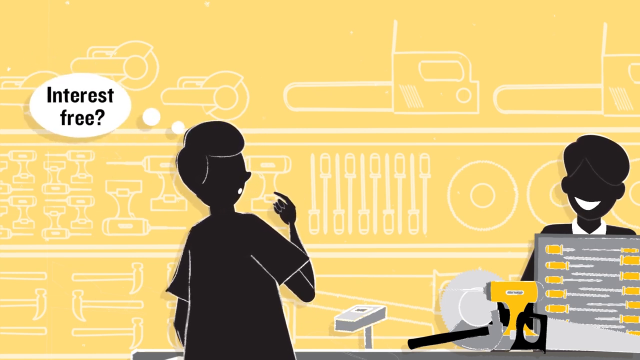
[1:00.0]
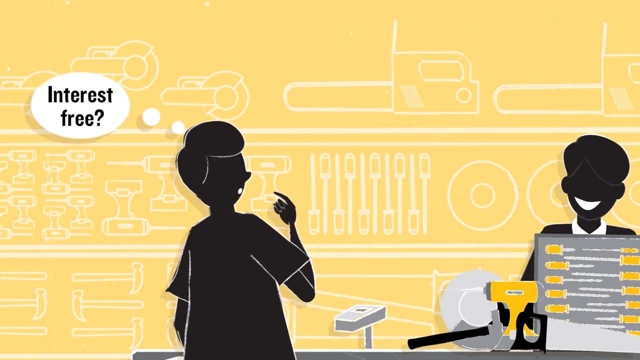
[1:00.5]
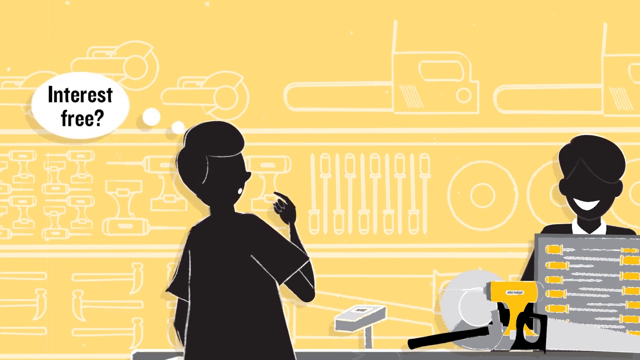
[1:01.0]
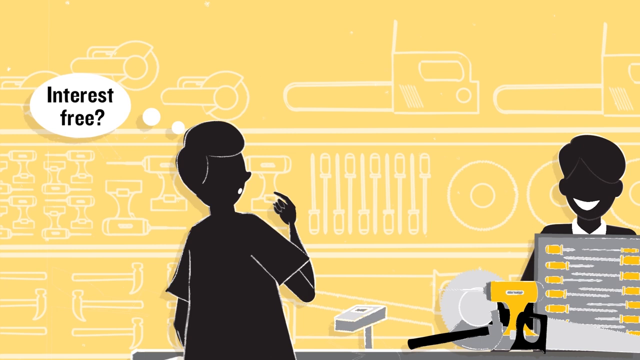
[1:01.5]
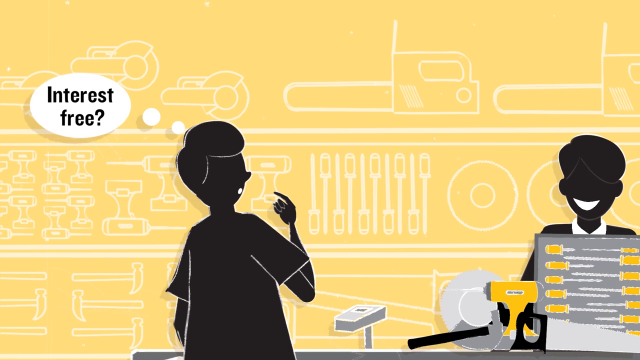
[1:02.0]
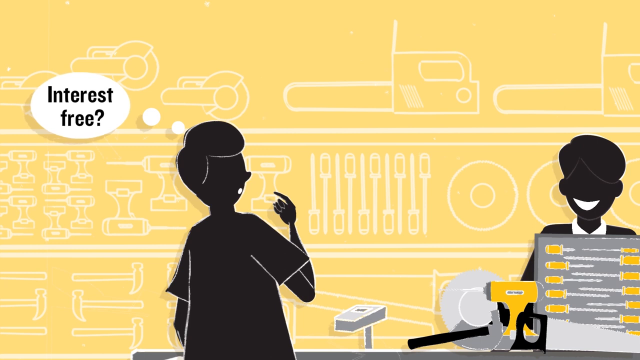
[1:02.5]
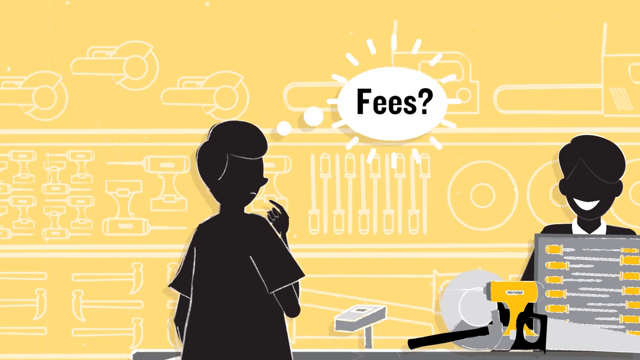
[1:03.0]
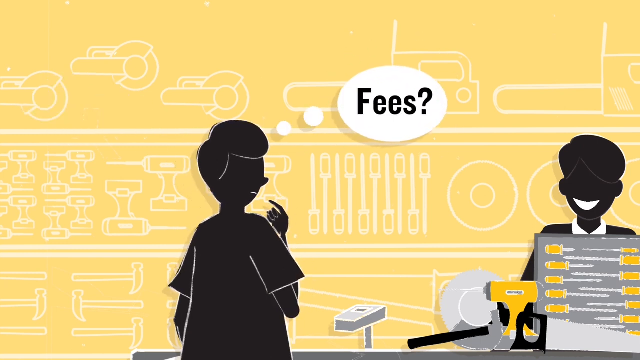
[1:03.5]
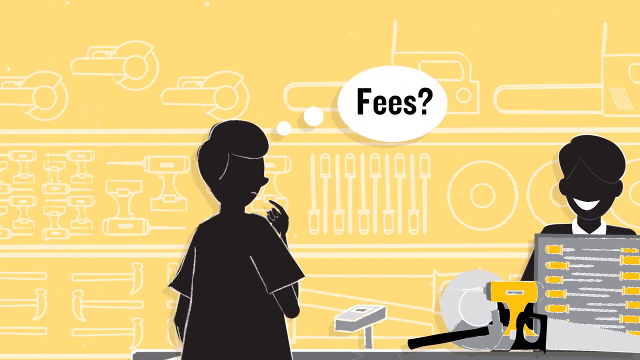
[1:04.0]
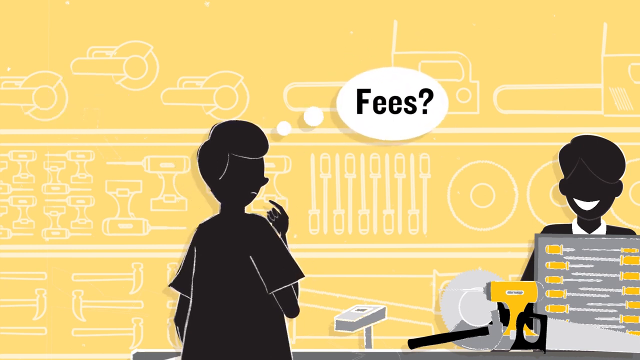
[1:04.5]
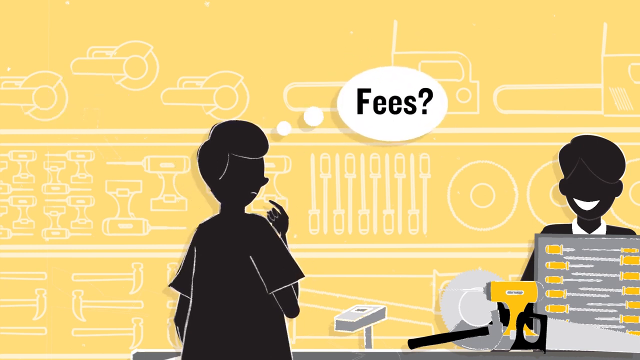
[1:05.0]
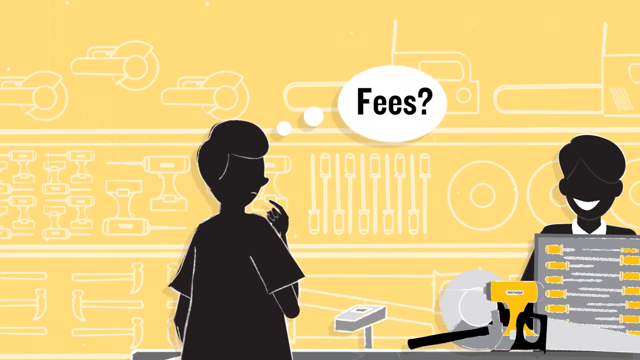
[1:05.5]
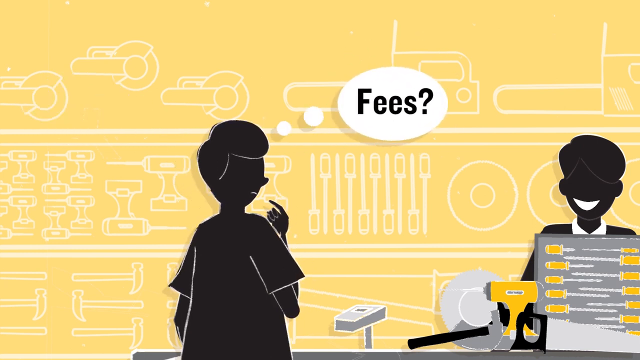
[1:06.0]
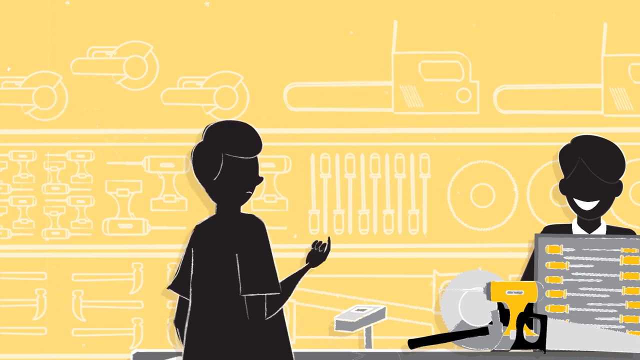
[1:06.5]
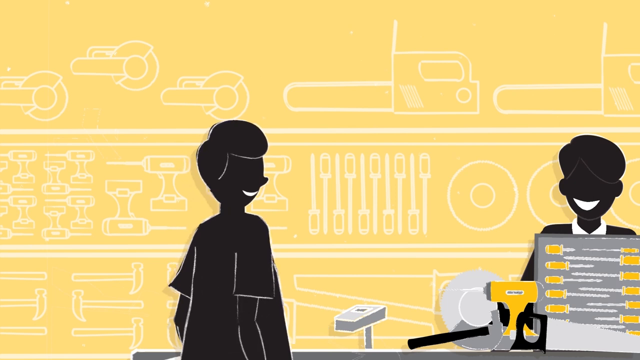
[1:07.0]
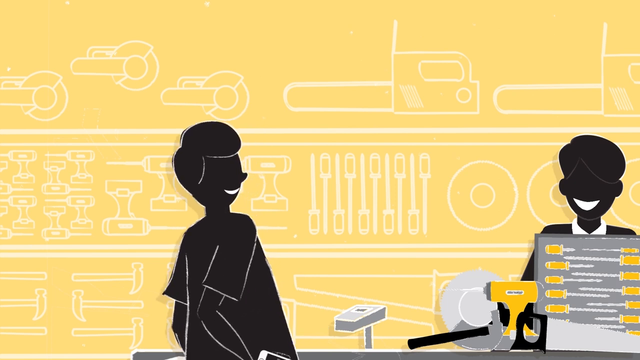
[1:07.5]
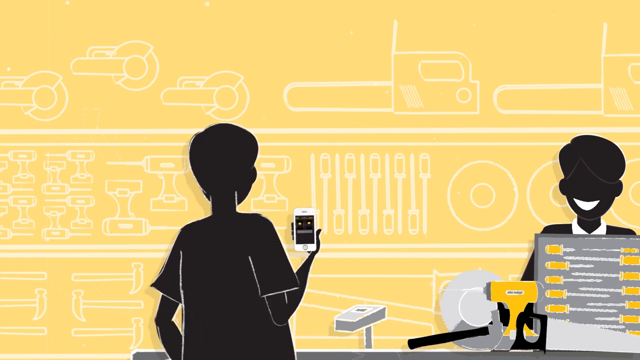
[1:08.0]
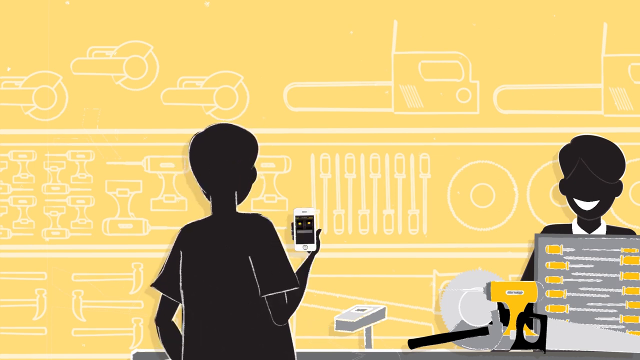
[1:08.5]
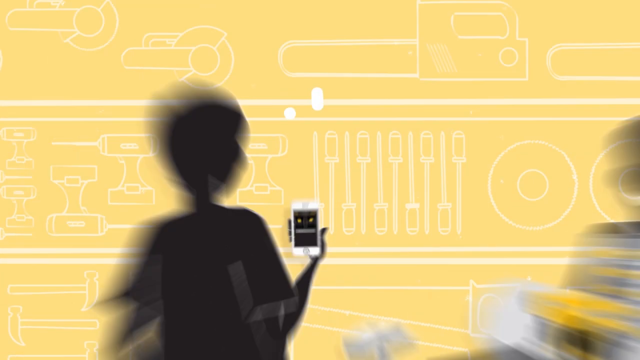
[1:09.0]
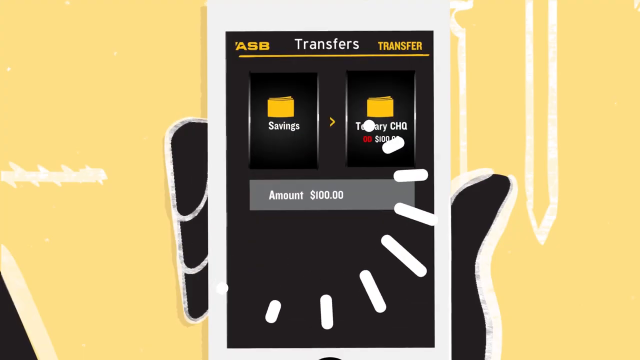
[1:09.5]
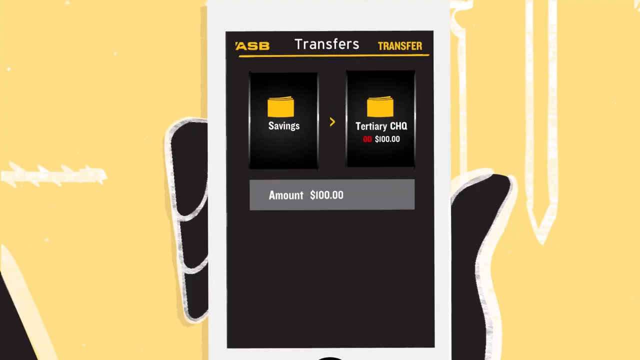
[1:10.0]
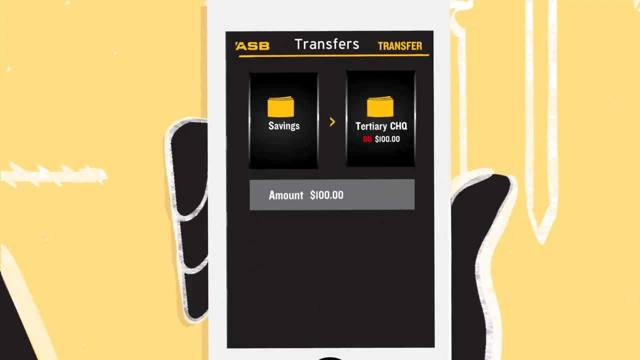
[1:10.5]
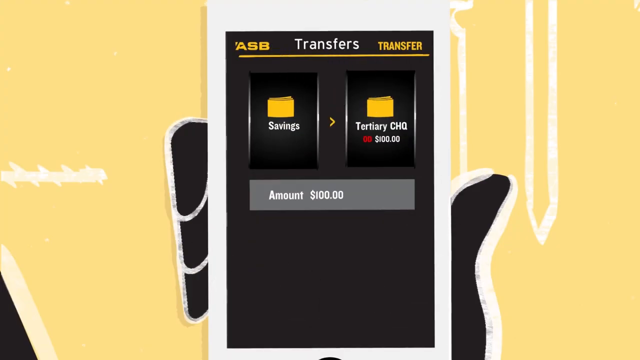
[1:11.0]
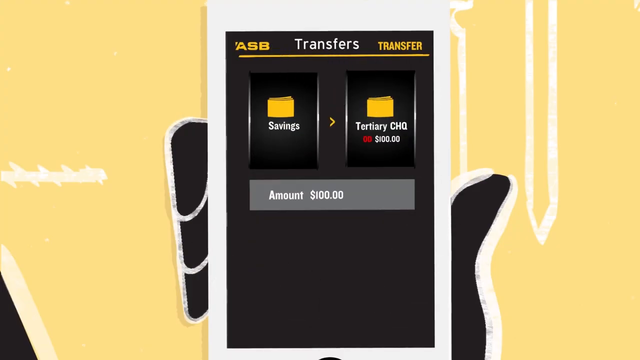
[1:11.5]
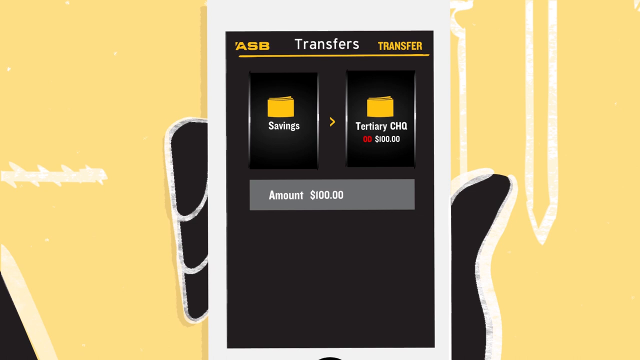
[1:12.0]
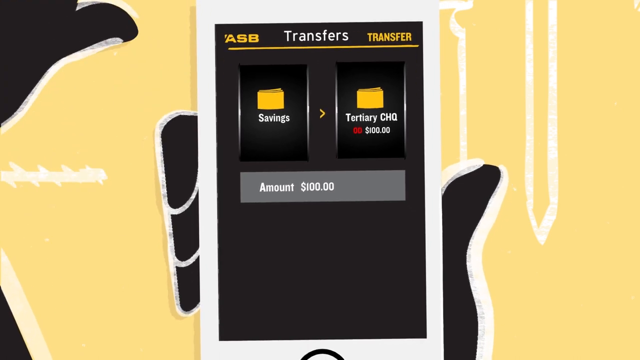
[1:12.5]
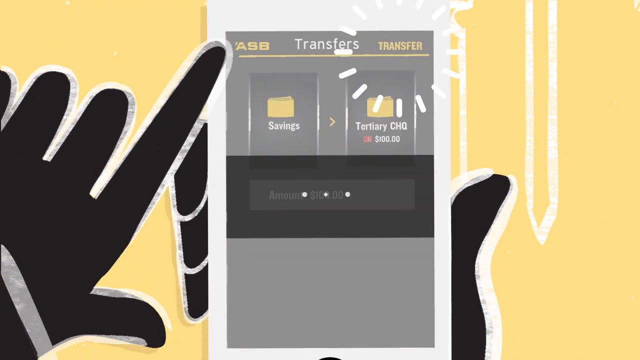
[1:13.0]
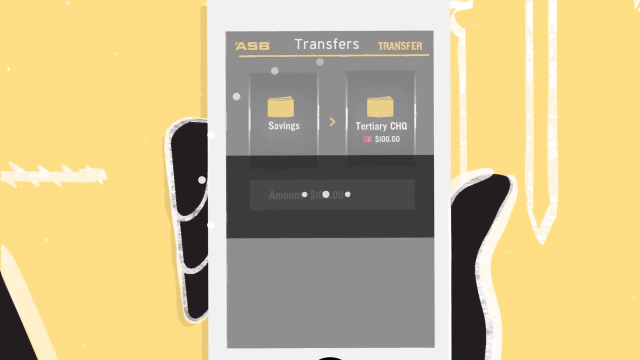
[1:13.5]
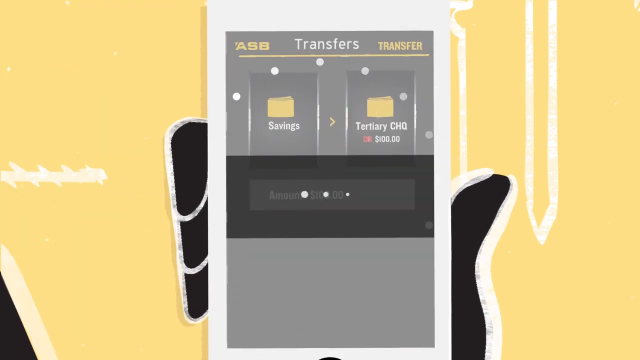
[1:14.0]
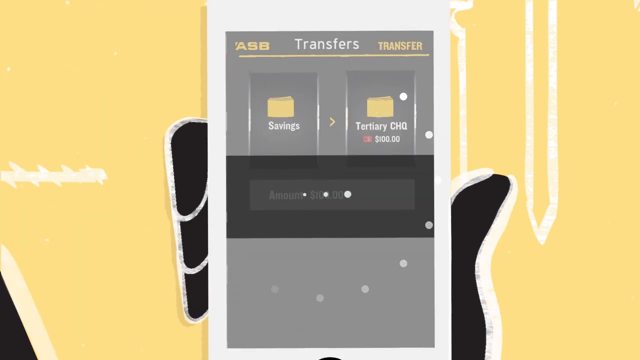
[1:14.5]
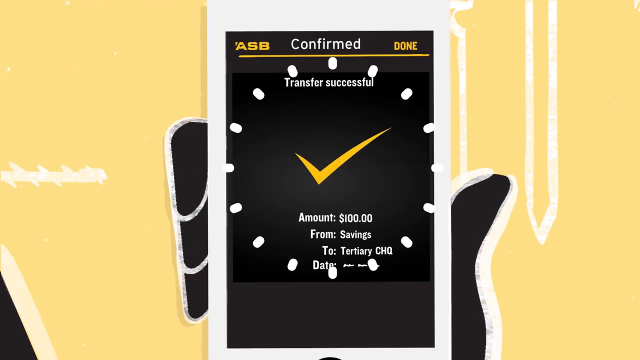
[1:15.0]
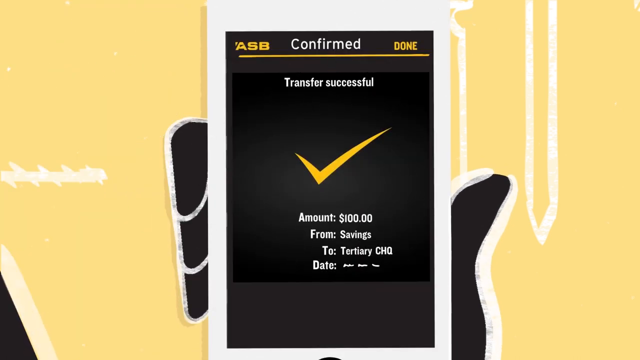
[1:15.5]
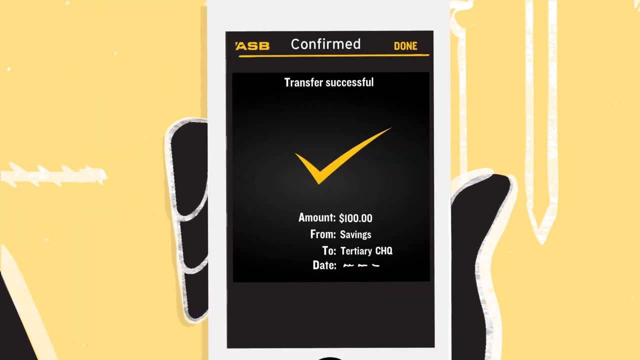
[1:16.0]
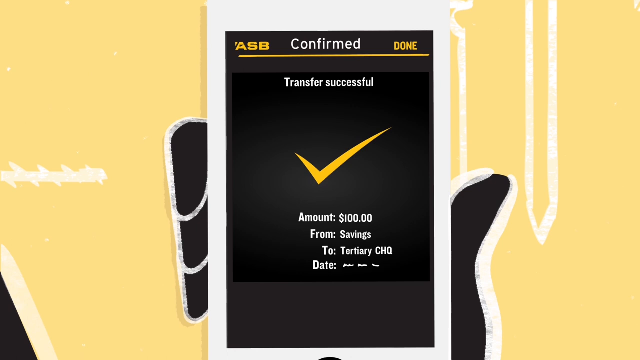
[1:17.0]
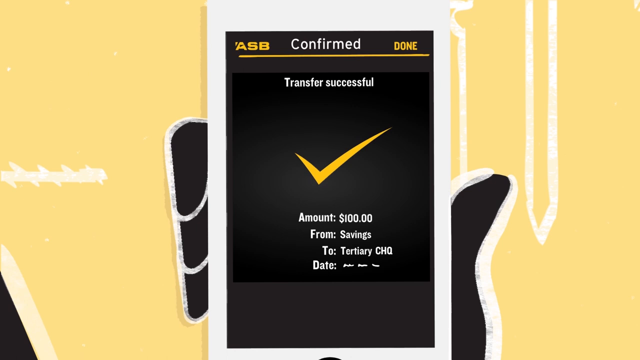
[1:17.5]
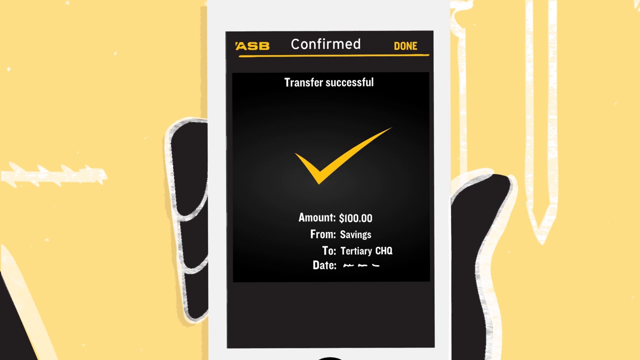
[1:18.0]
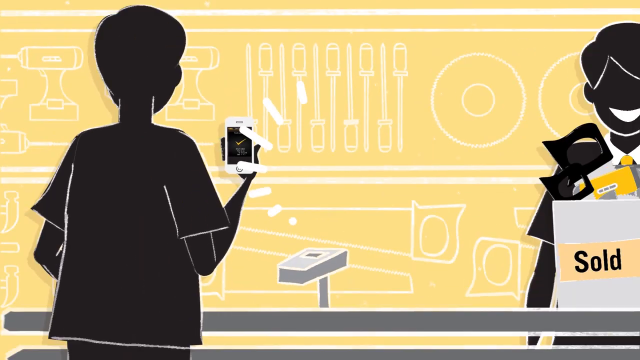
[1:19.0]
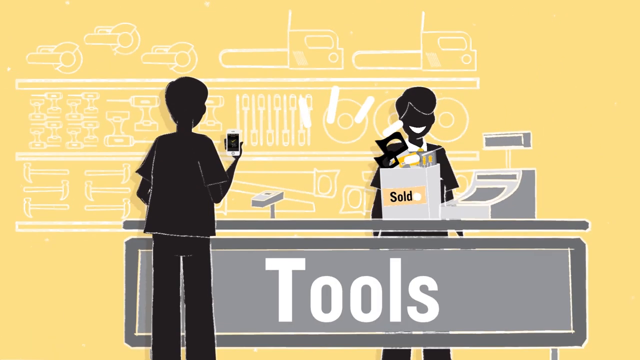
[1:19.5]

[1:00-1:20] A man asks about fees and takes out his phone to make transfers. The phone screen shows ASB transfers involving savings and a "tertiary check" account, amounts of 100,000 and 10,000 from savings, dates, and a "done successfully" confirmation.